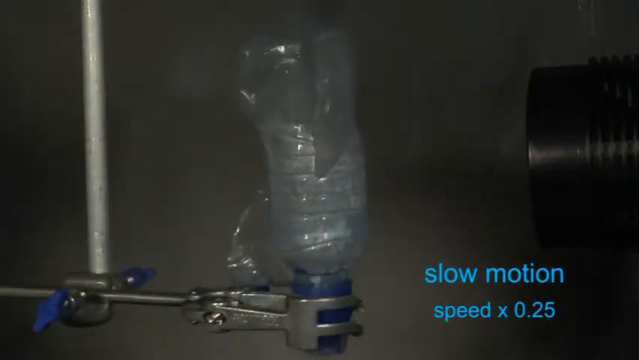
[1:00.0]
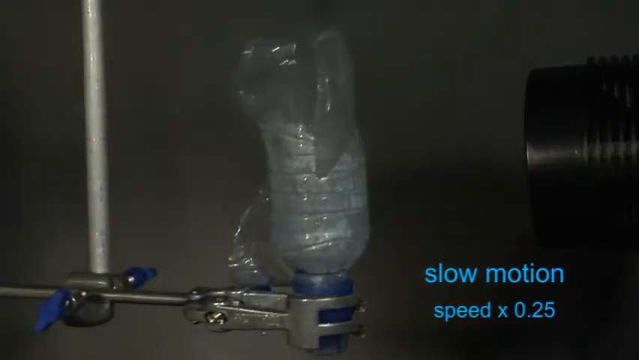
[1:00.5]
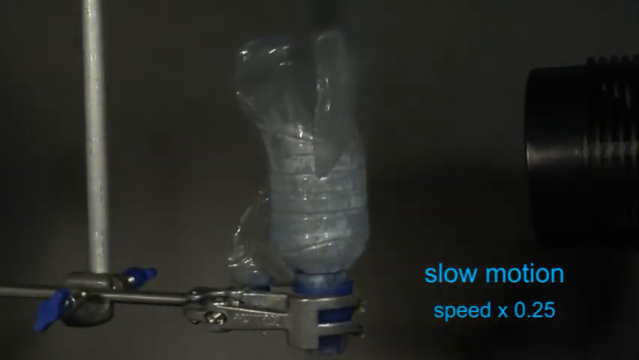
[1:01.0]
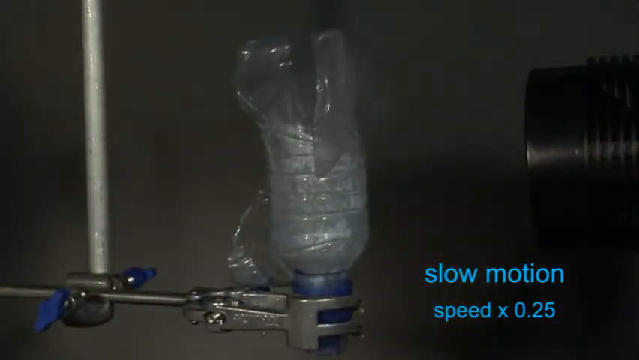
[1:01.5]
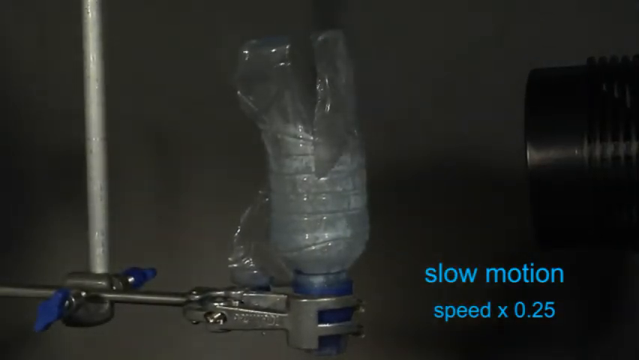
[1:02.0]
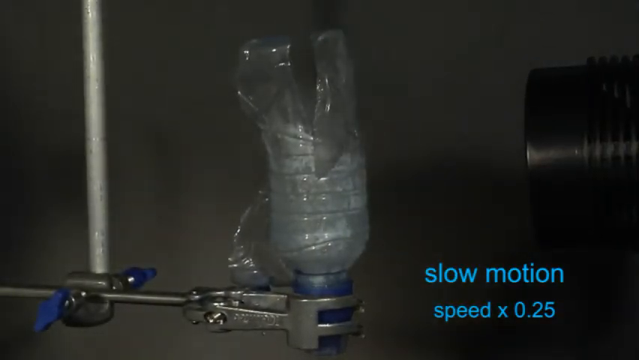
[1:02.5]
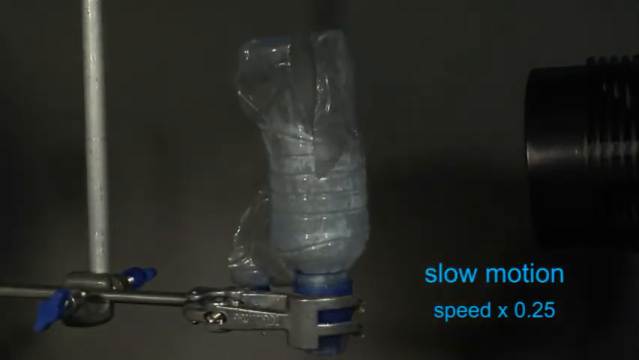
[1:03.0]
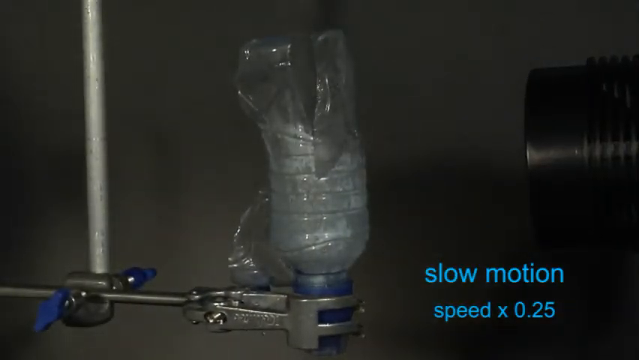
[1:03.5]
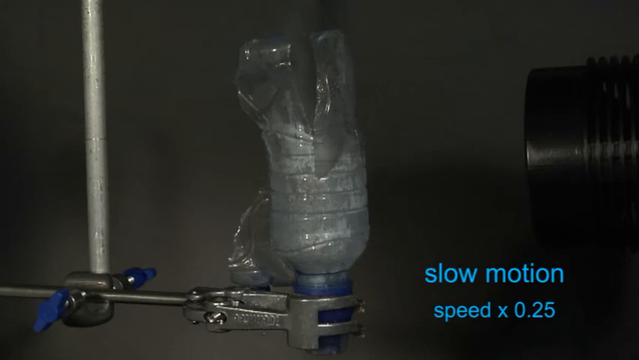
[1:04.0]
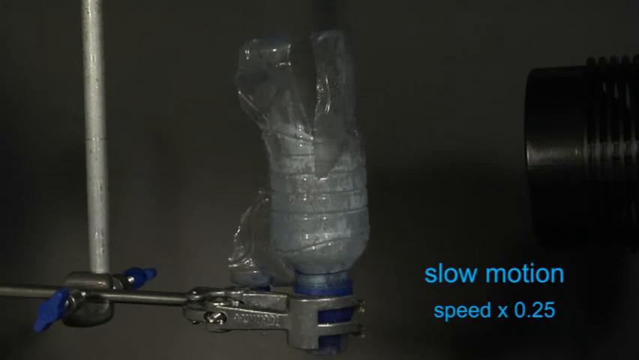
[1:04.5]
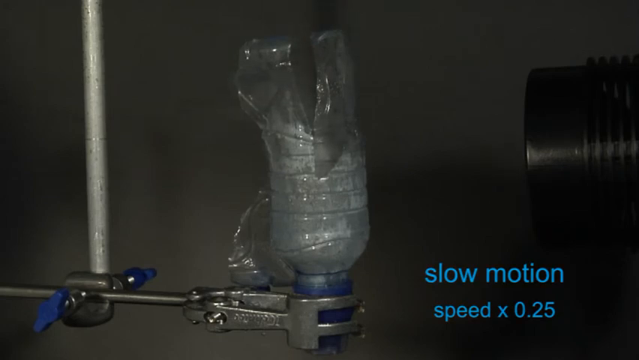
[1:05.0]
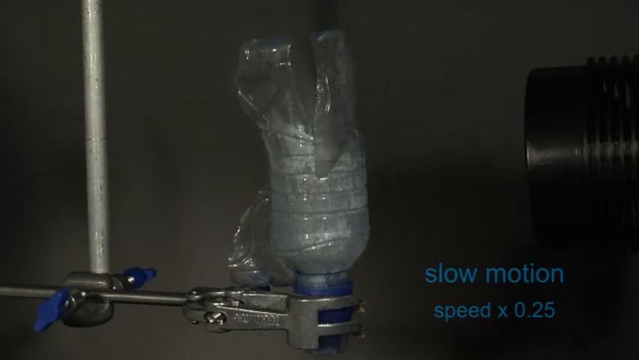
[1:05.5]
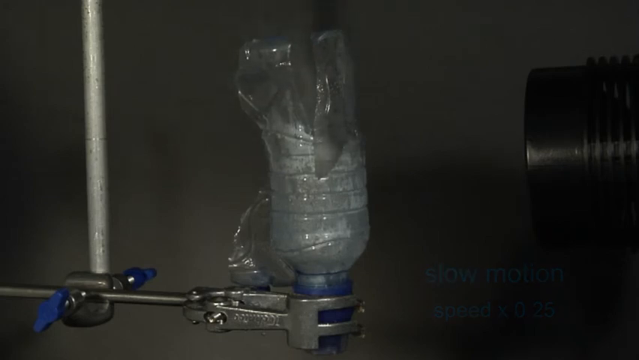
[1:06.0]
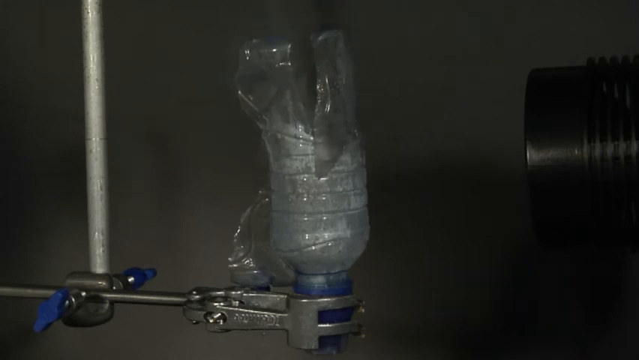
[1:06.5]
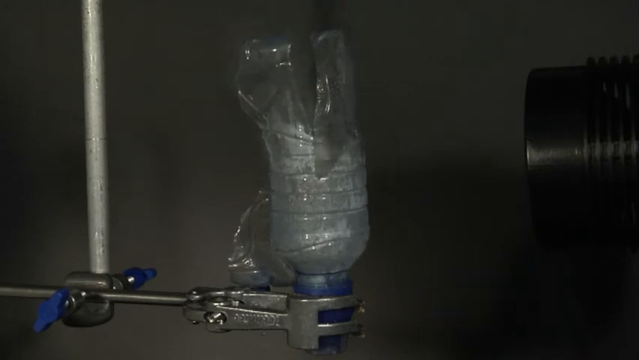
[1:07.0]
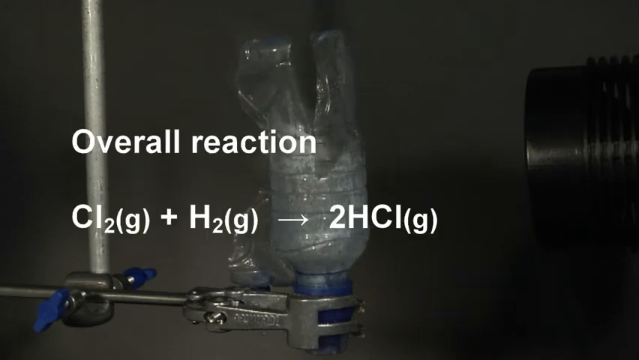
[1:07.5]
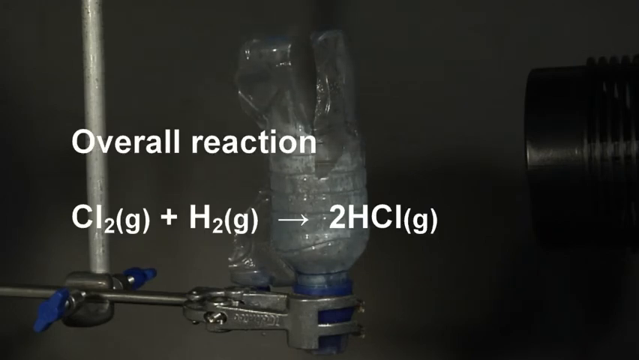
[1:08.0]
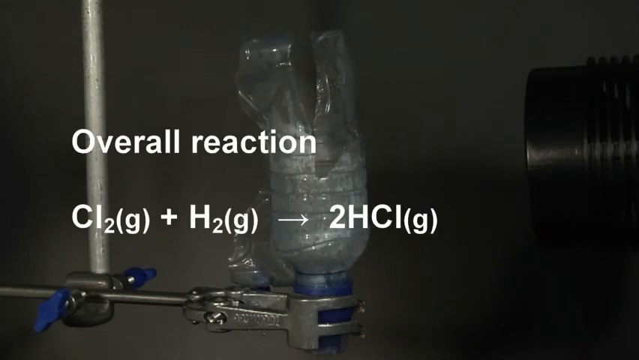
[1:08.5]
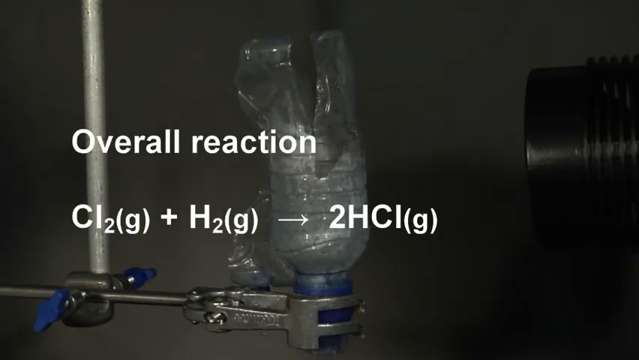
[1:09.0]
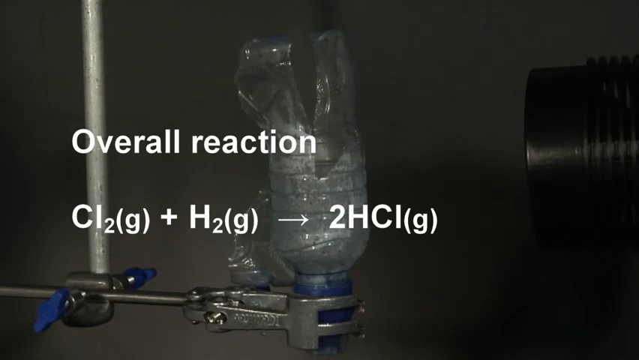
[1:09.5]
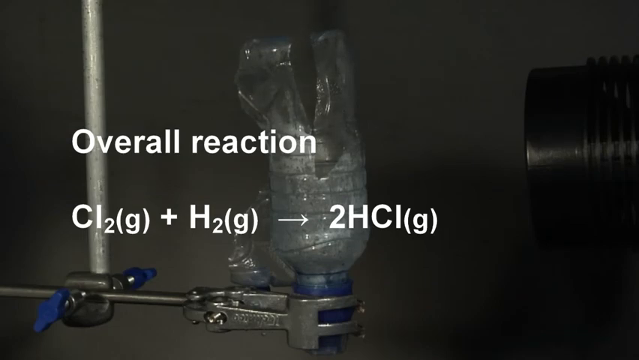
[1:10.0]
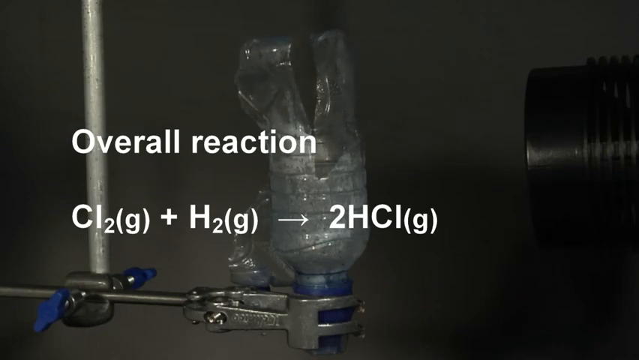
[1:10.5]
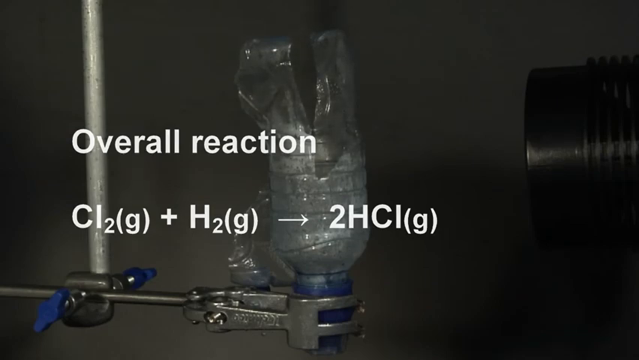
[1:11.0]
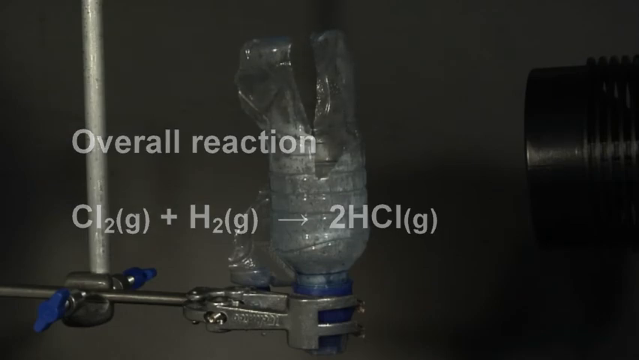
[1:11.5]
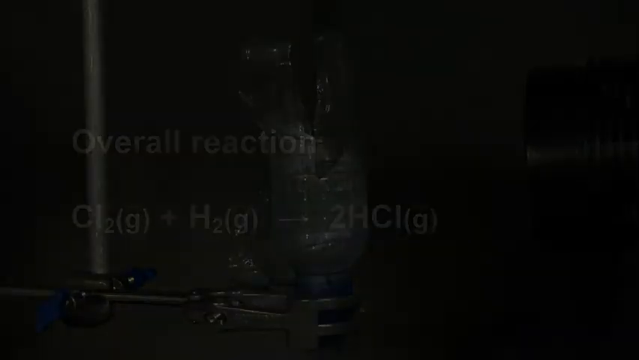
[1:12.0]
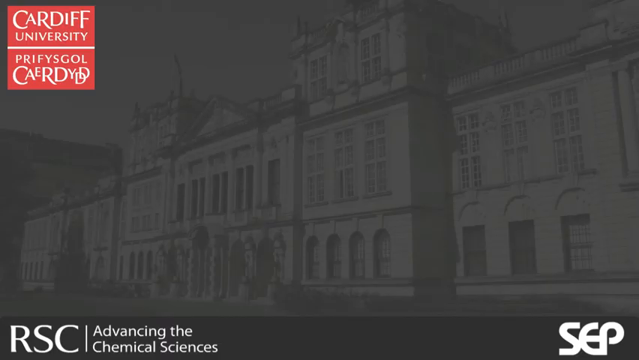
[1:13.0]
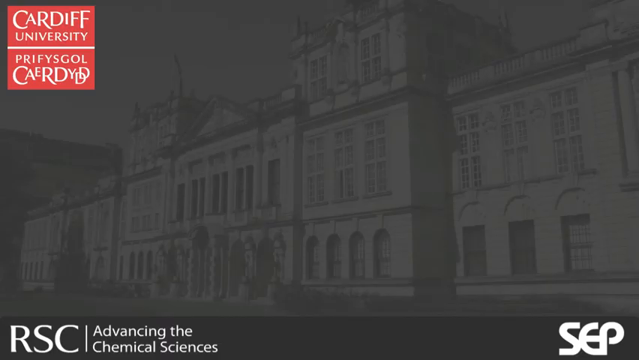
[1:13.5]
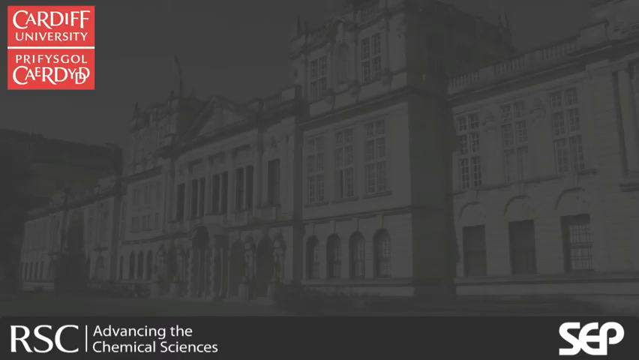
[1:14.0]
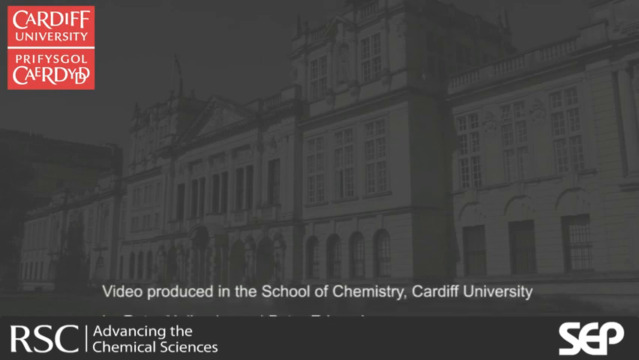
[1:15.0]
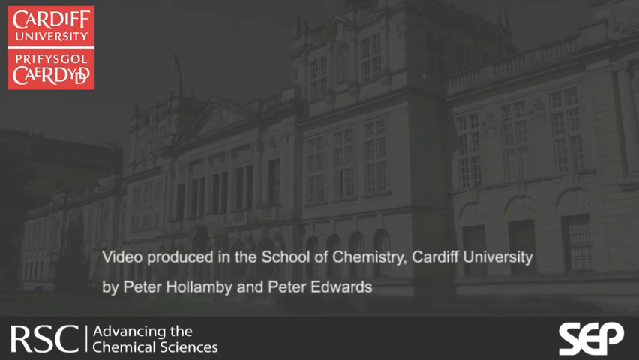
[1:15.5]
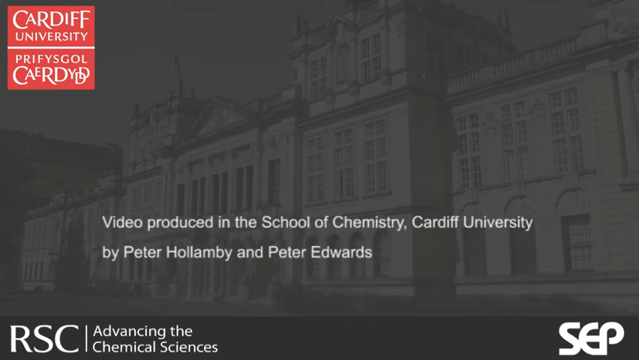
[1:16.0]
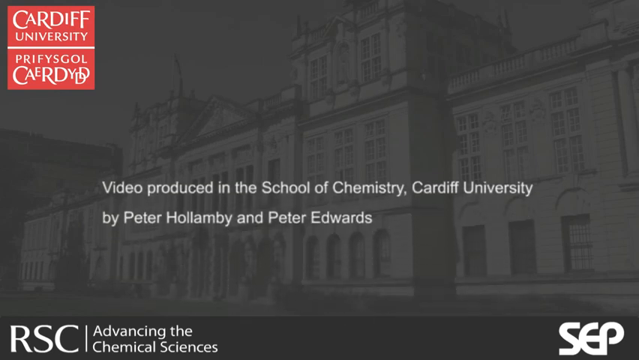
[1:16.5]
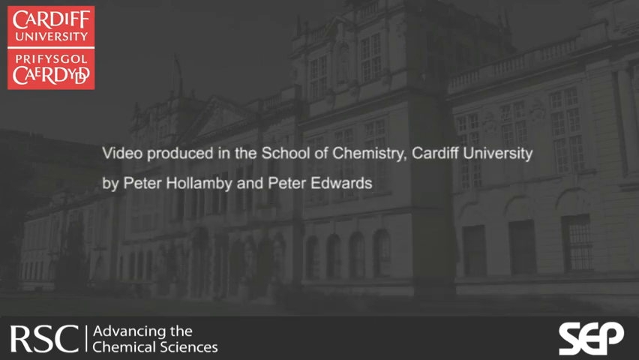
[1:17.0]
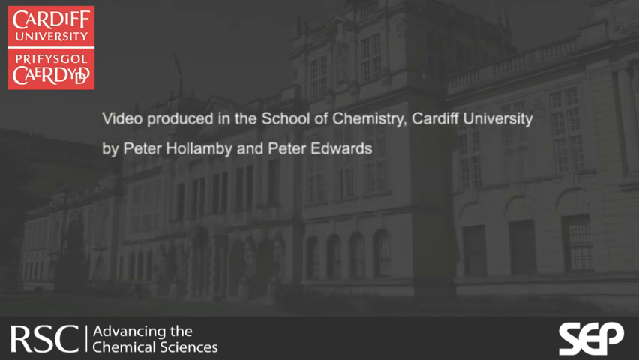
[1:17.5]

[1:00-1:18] An upside-down water bottle with a blue cap is held by some type of grasping machine, with a black flash gun next to it. Text reads "slow motion speed," and there is an explosion, like a flash in the water bottle. The bottle kind of shatters and is kind of busted open, with smoke coming from it; the bottom half is pretty much ripped open. Text about "overall reaction" appears with a formula. Then the text "Cardiff University" appears along with what seems to be a university building. Text reads "video produced in the School of Chemistry Cardiff University by Peter Hollaby and Peter Edwards."